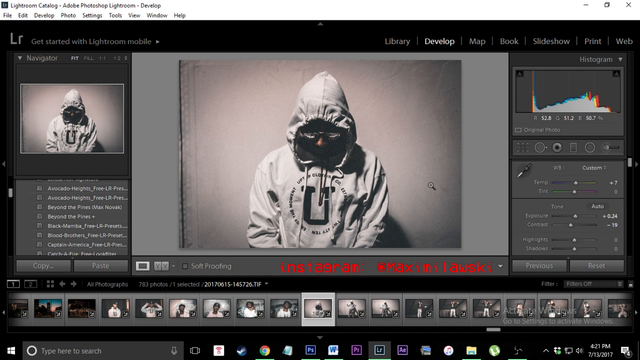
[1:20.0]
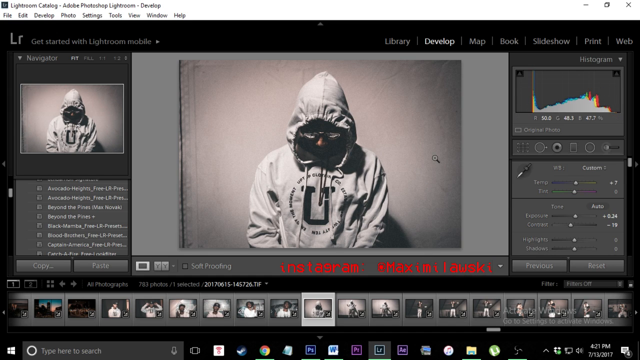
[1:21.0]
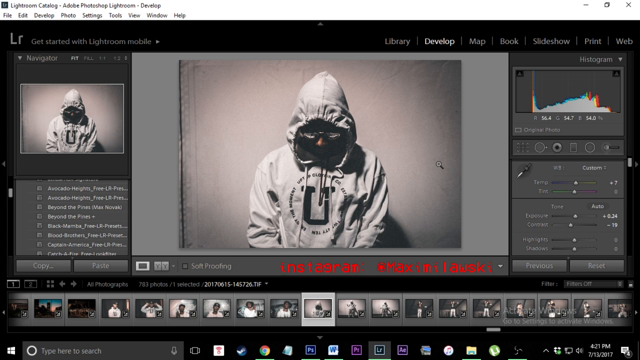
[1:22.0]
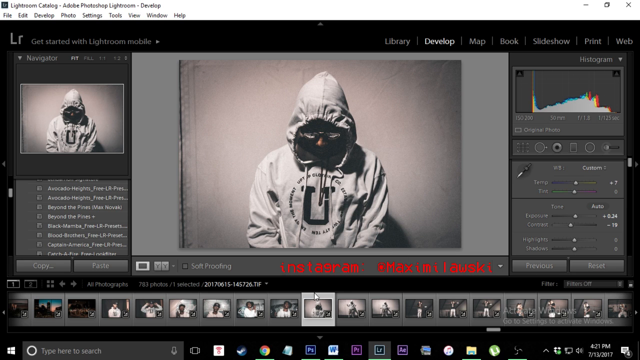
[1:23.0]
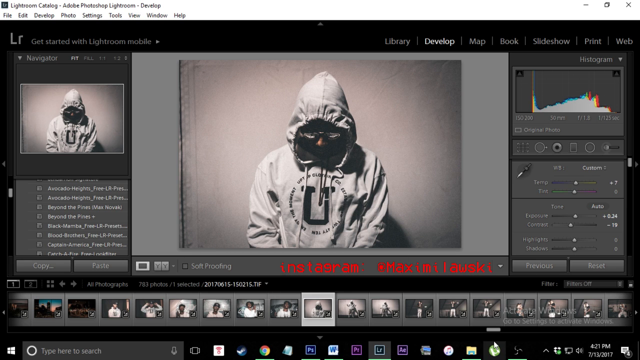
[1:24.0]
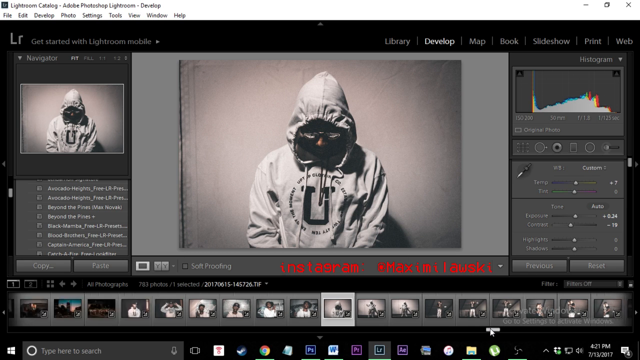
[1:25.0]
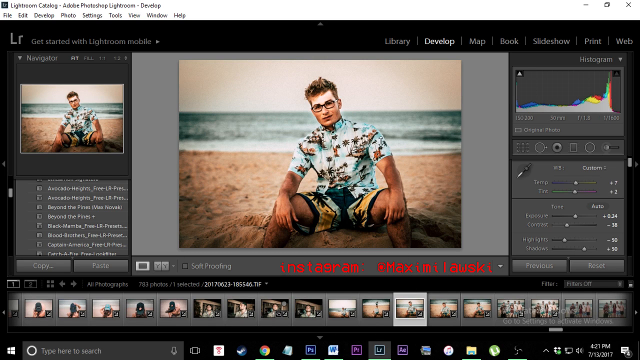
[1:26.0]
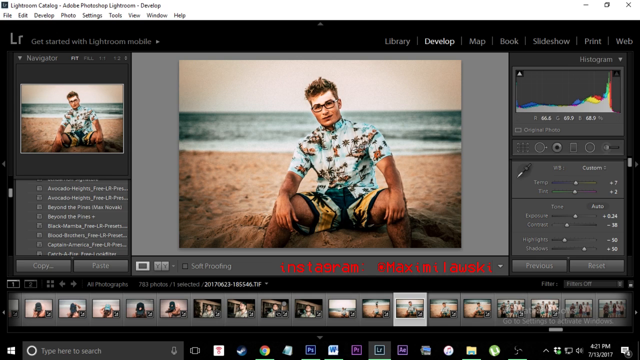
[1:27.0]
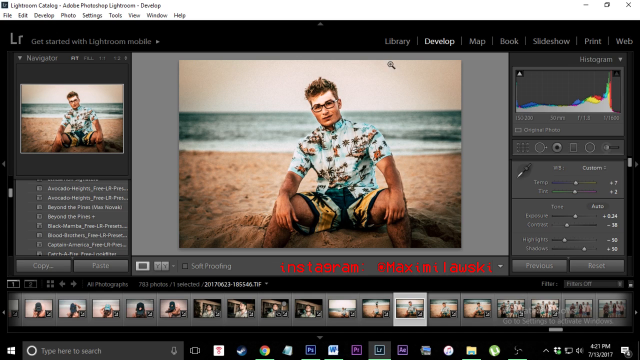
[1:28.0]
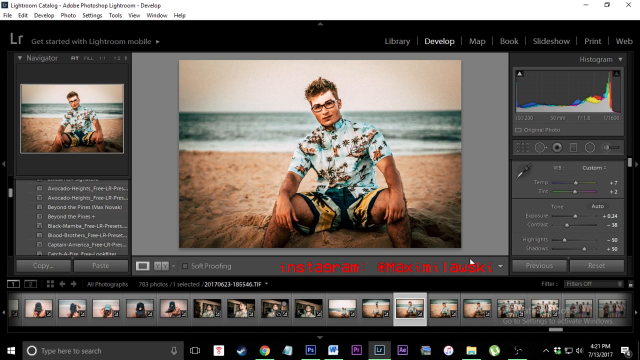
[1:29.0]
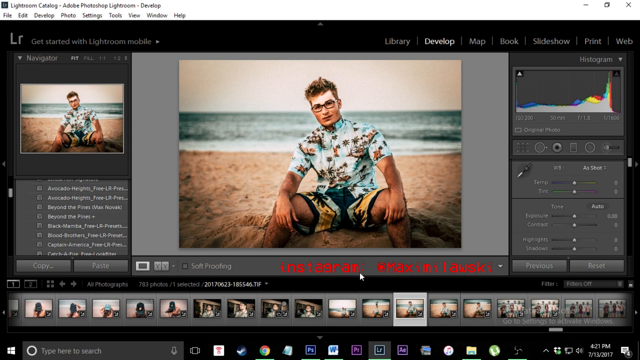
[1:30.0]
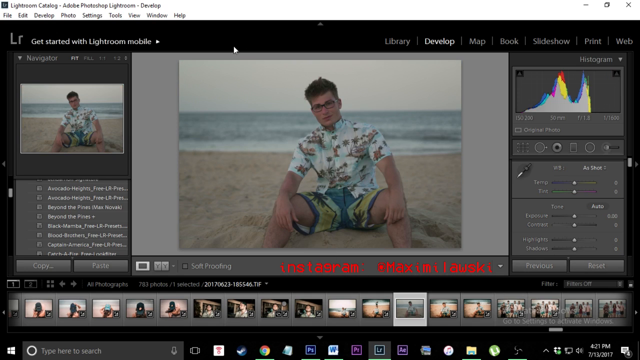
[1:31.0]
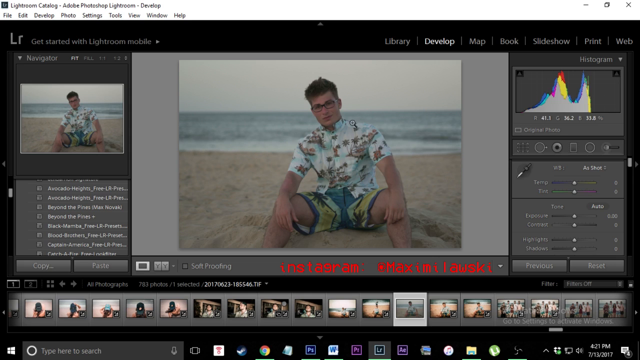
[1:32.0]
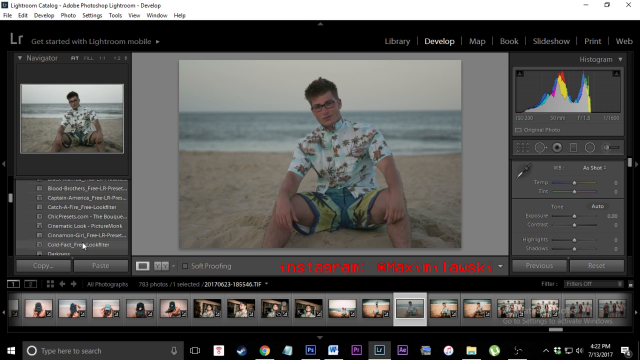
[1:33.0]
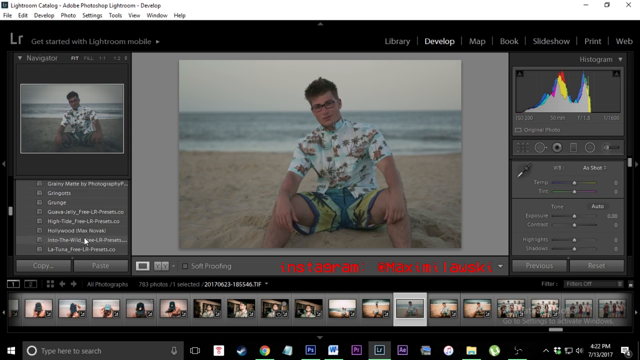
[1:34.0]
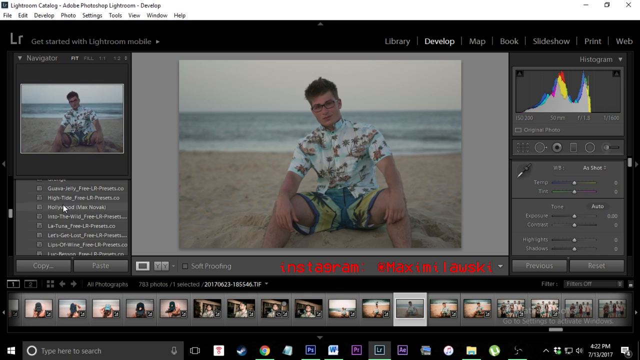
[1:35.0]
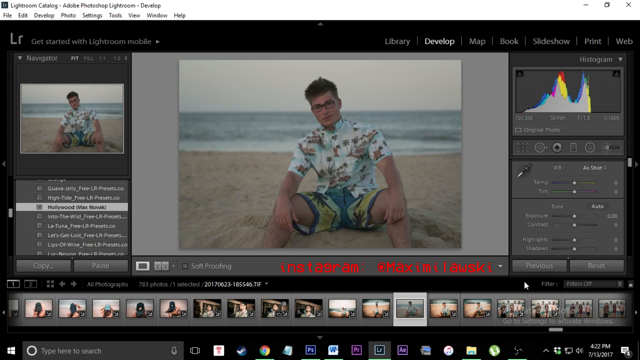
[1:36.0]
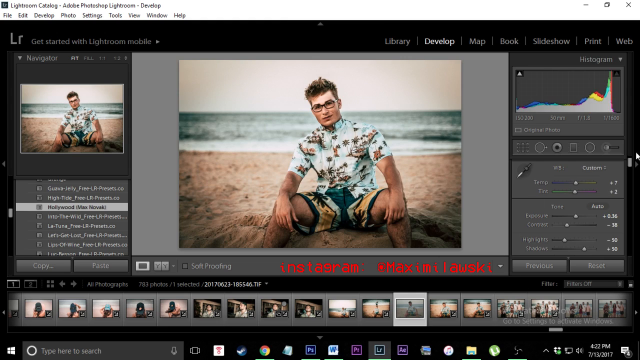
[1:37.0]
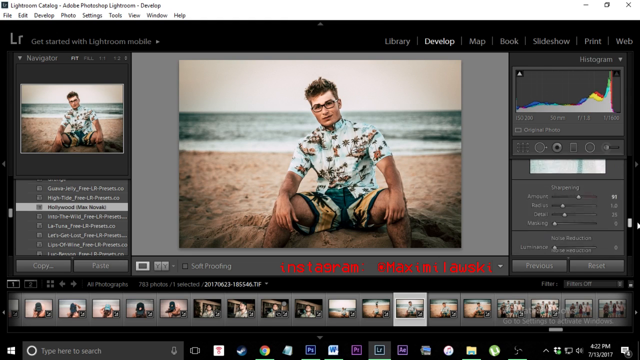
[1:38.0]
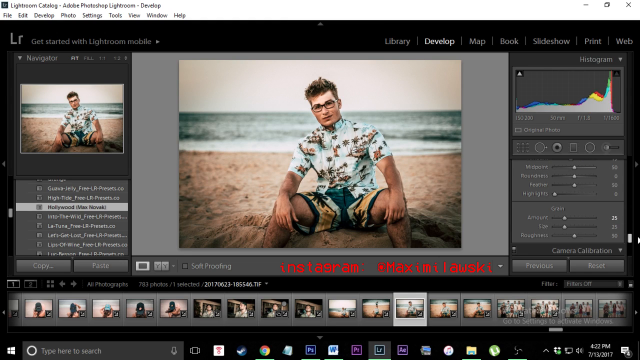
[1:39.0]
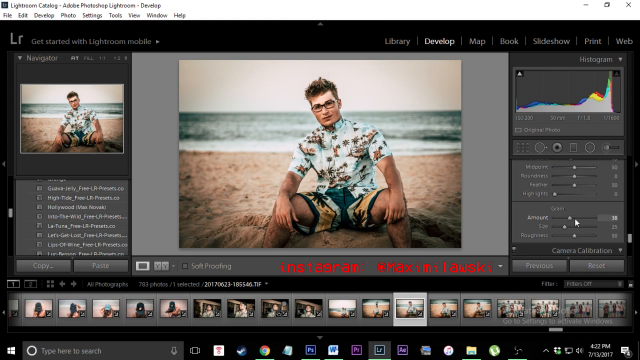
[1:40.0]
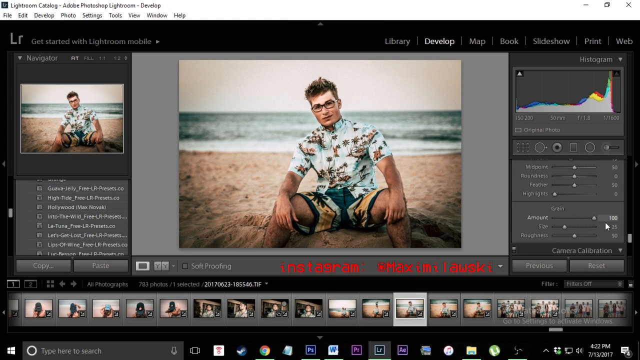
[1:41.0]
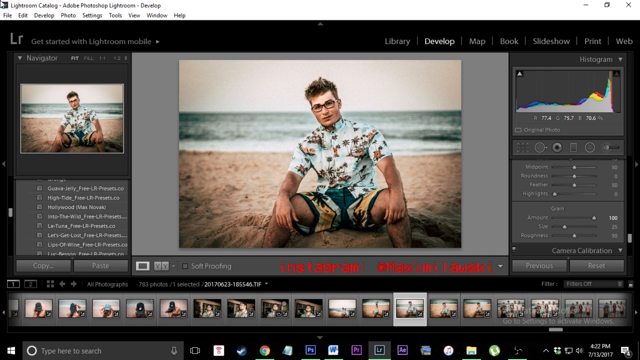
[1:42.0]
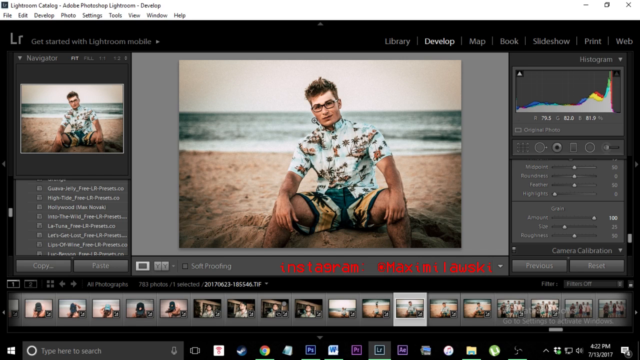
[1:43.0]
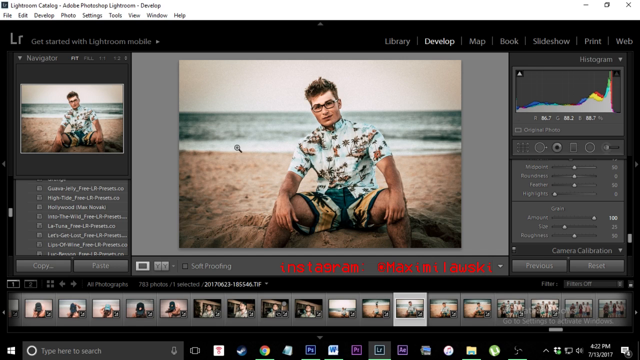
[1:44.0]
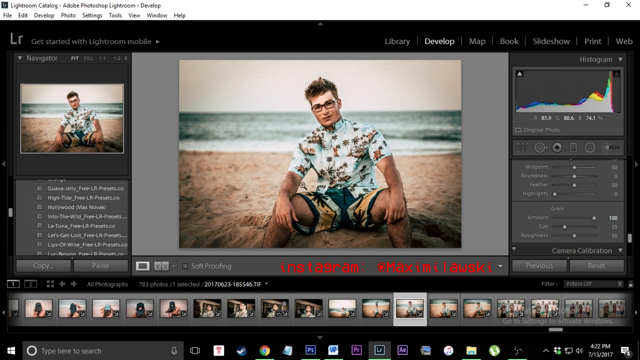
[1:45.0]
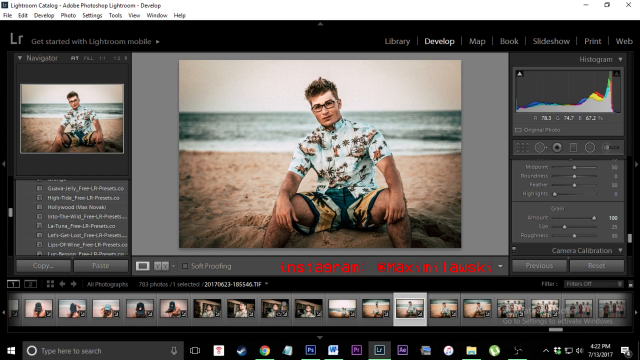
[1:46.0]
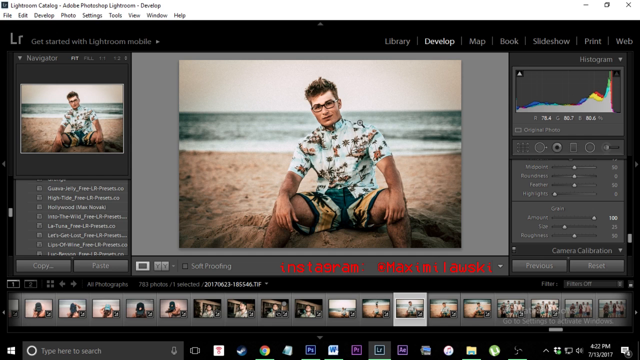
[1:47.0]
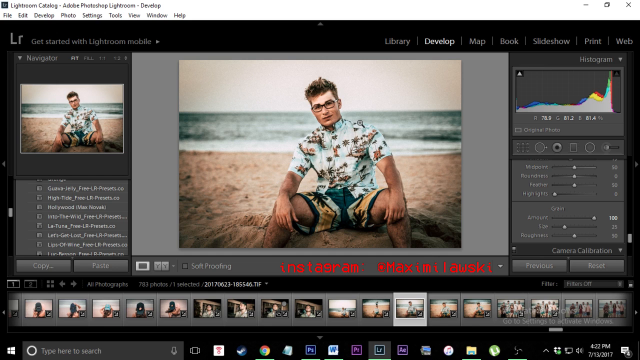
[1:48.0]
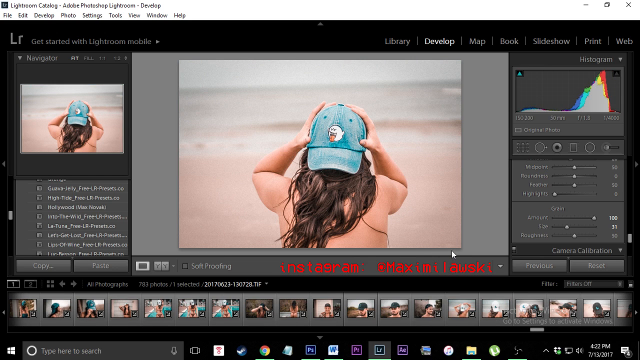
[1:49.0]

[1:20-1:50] The image of the man in a hood is in the app, where it has been edited from its original version into another version in which the young man is seated. Effects continue to be applied to the image. Effect options are on the left side, used to change the color of the image and adjust the photo's brightness from dull to bright. The editing then moves on to the next photo.